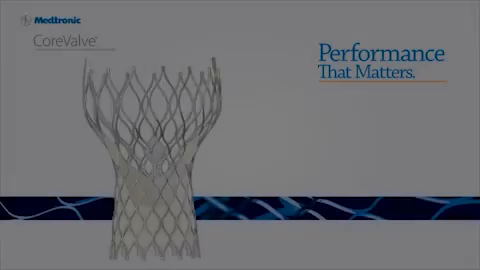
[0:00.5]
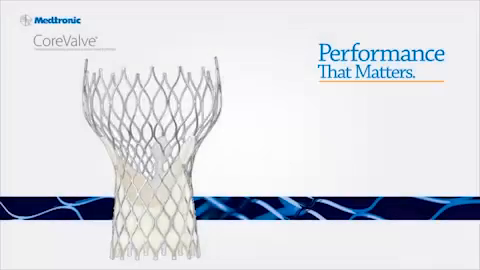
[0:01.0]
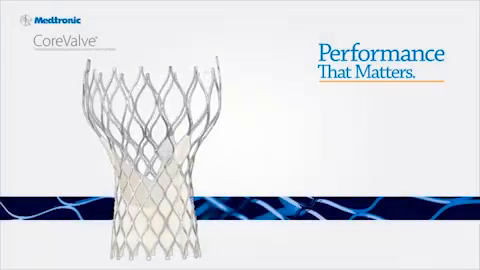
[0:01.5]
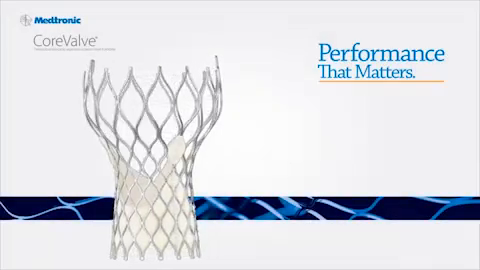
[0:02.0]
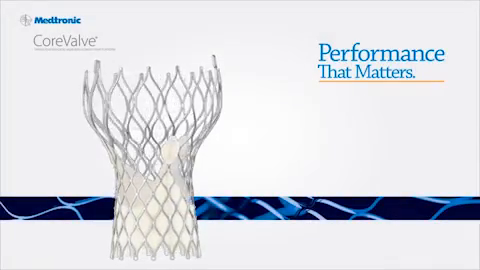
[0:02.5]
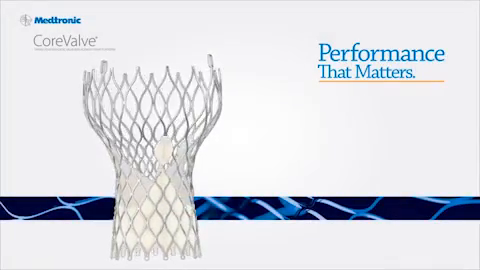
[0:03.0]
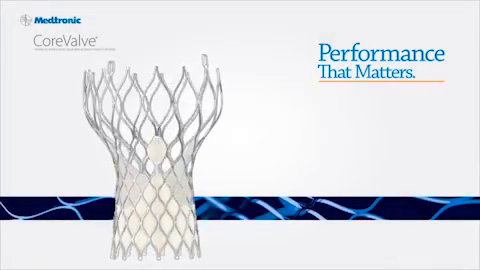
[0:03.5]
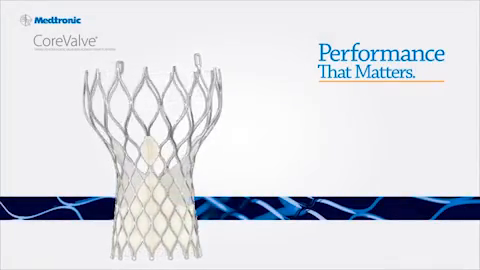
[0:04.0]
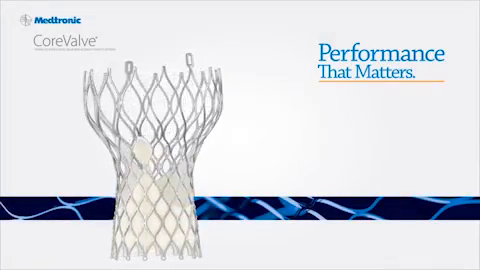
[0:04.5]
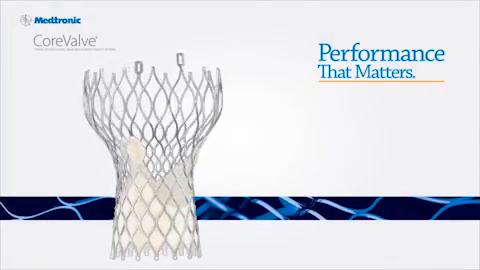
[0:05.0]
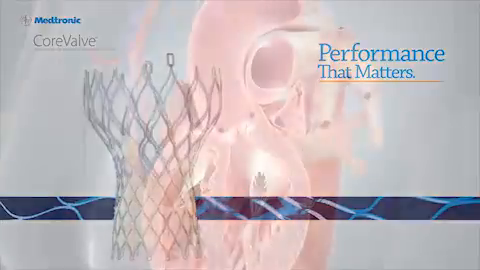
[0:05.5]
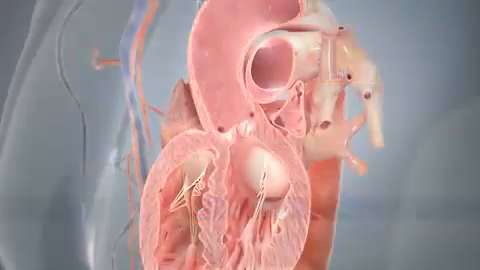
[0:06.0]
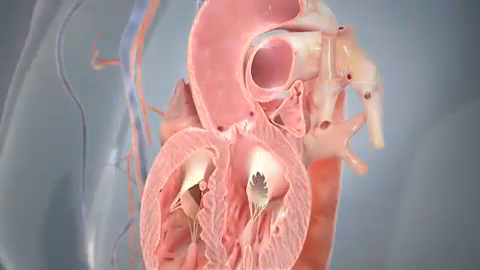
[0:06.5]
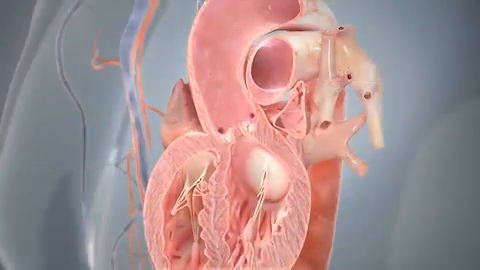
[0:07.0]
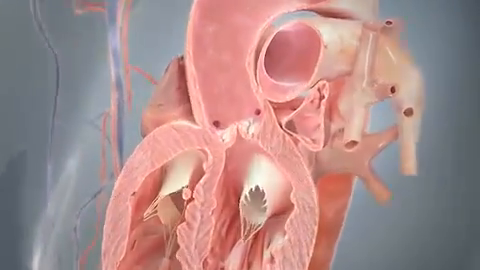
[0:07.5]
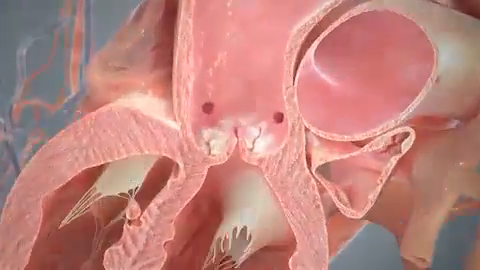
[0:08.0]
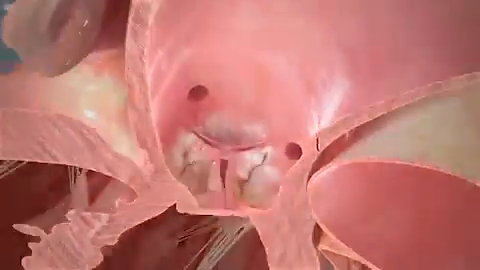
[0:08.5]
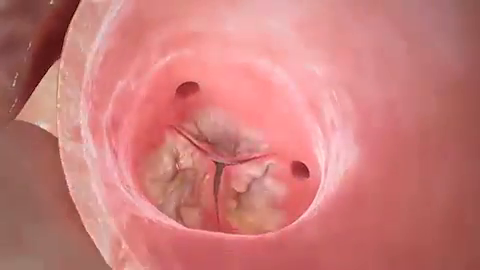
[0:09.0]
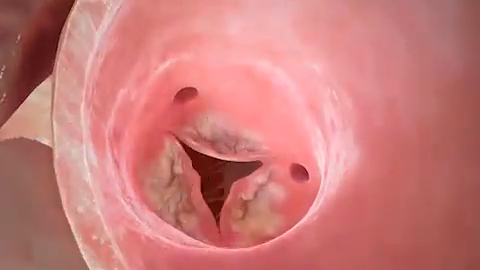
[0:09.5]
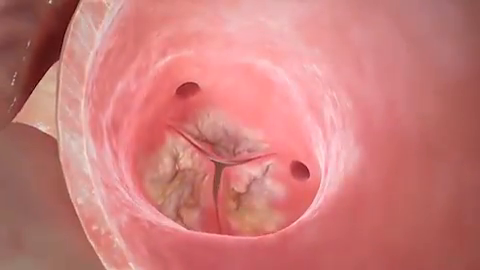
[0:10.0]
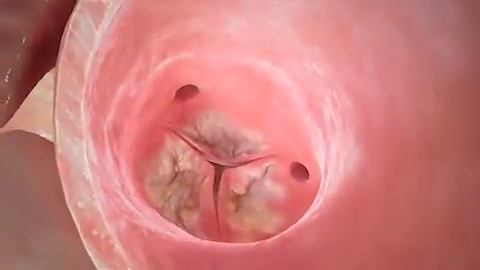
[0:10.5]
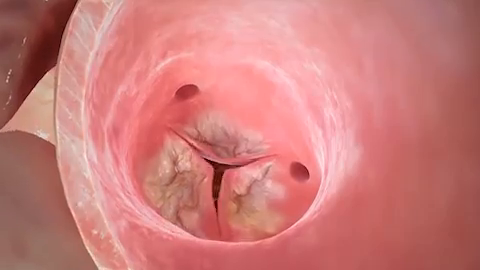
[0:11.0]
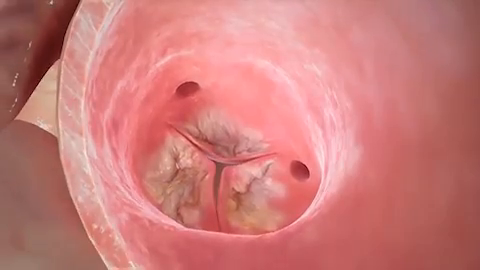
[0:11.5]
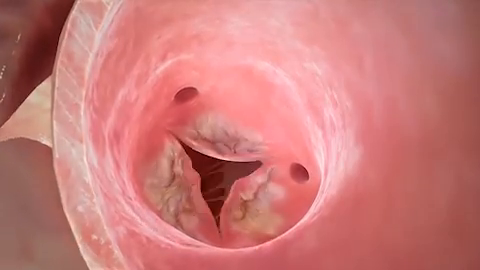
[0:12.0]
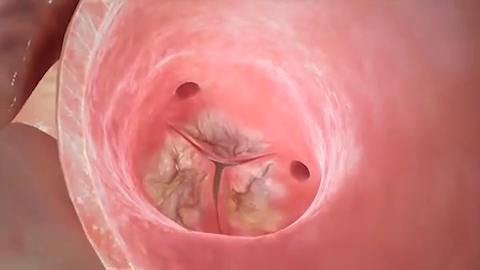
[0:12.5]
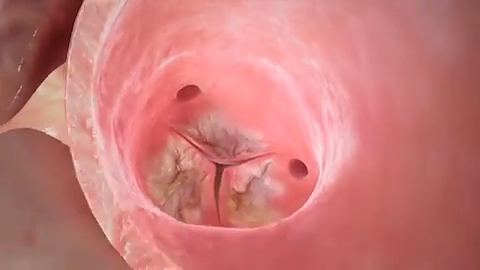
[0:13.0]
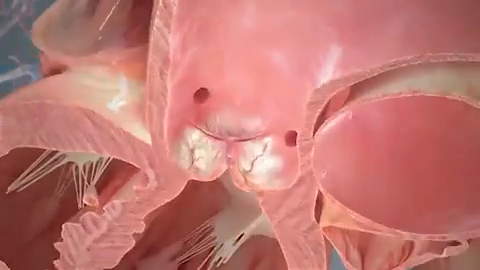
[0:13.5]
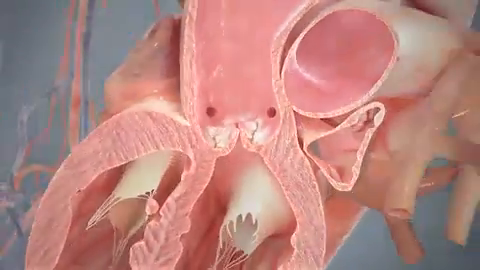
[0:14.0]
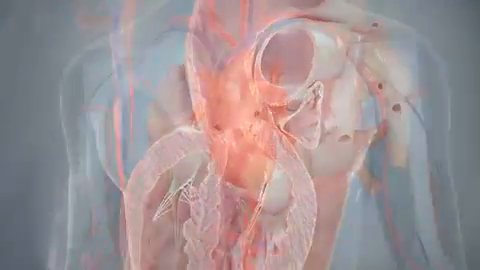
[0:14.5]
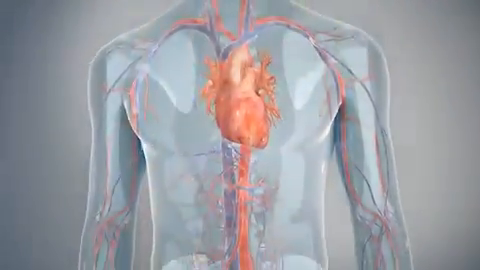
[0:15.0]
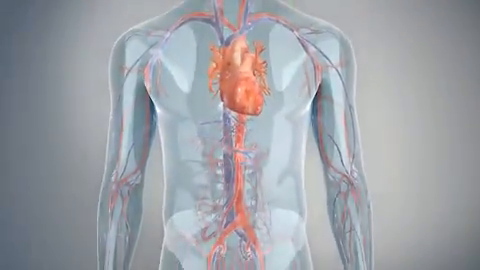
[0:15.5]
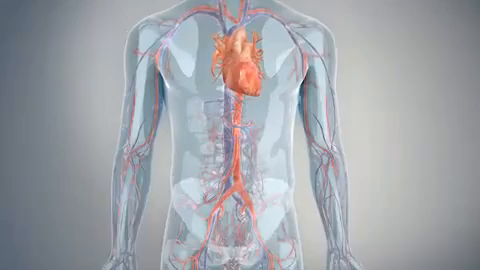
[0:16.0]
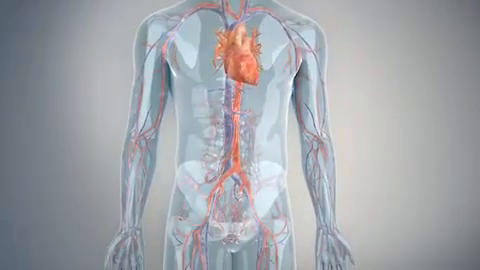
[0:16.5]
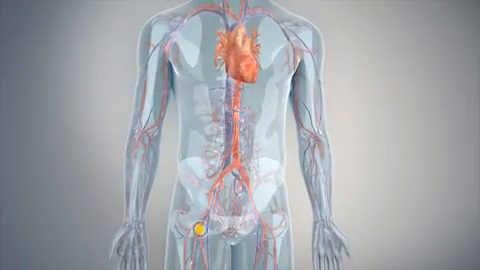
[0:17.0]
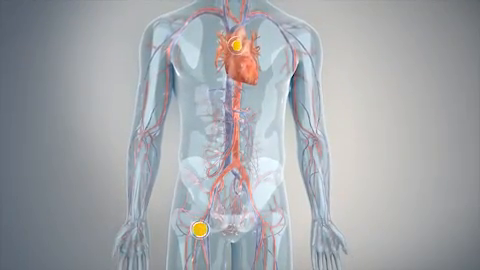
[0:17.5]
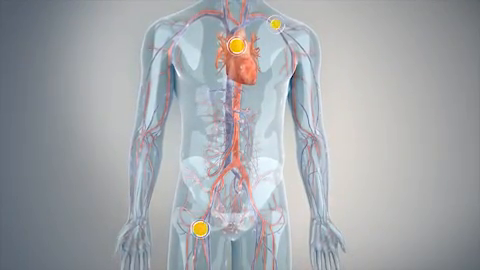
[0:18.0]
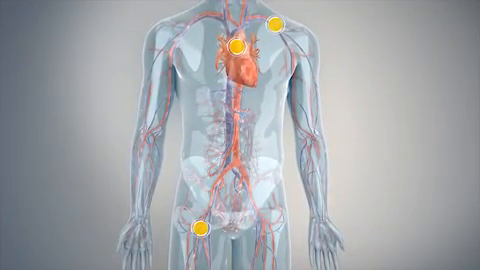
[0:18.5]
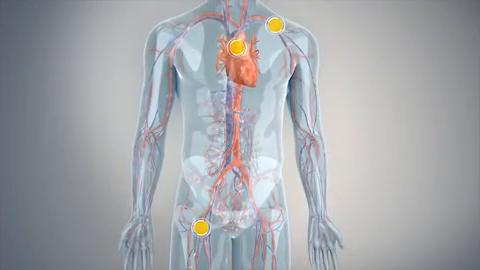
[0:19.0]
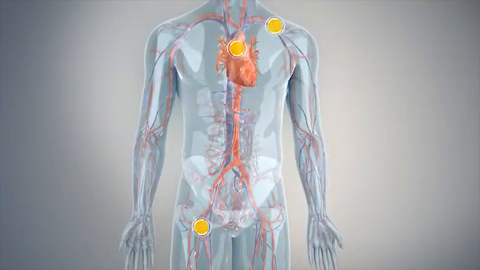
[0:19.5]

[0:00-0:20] The video shows the inner workings of what is possibly a heart valve, set inside a heart. At the start, text in the upper right reads "performance that matters," and in the upper left corner it reads "Medtronic" and "core valve." A kind of netting, almost like a basketball hoop net, comes down while spinning, possibly working on the valve areas of the heart as it goes in. Then three areas inside the heart move, opening and shutting as the heart beats.